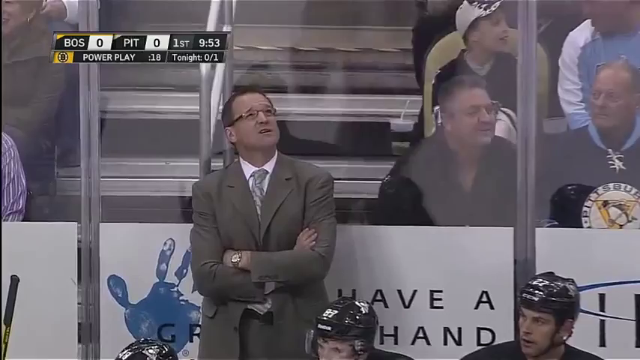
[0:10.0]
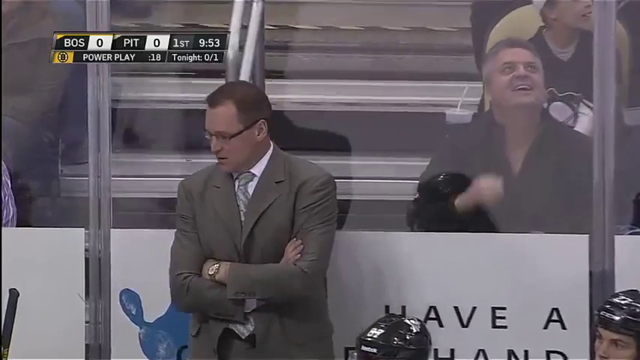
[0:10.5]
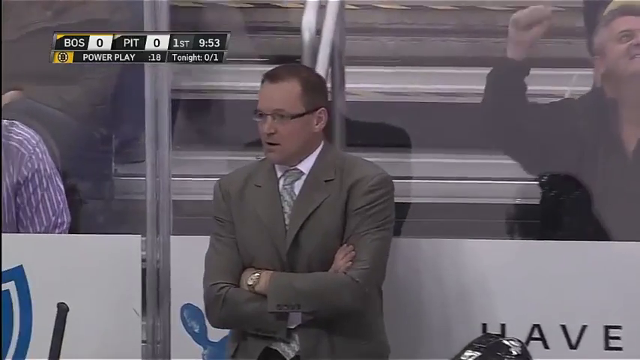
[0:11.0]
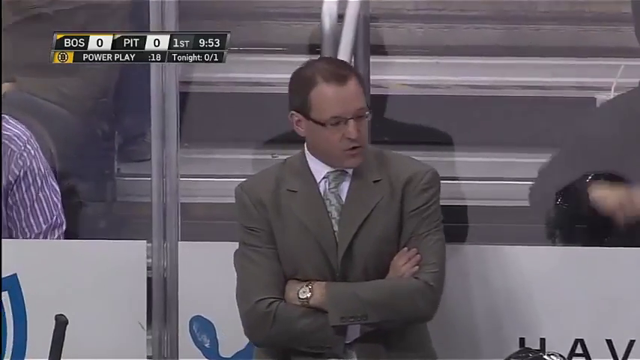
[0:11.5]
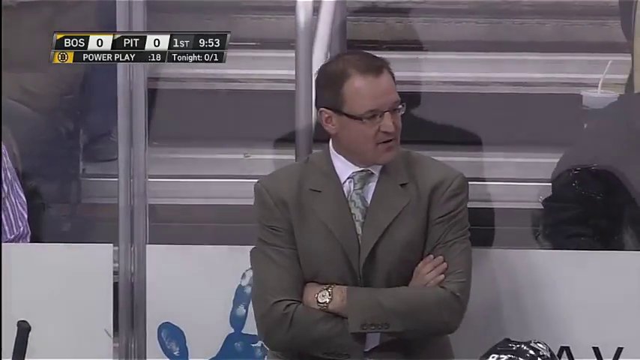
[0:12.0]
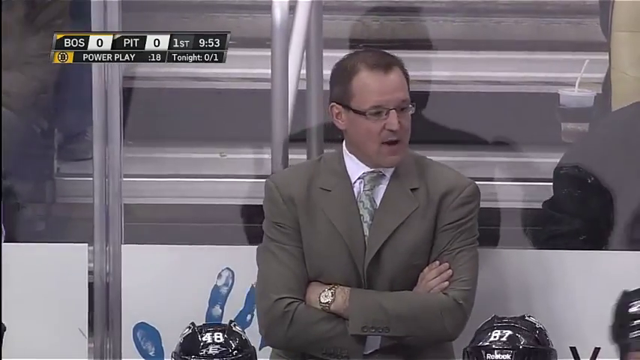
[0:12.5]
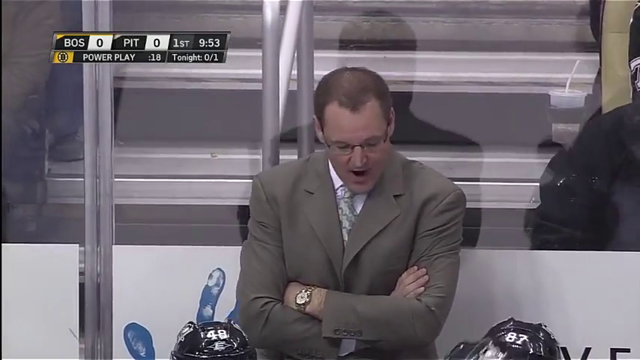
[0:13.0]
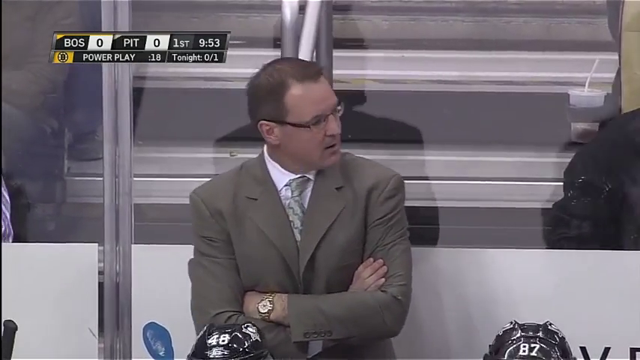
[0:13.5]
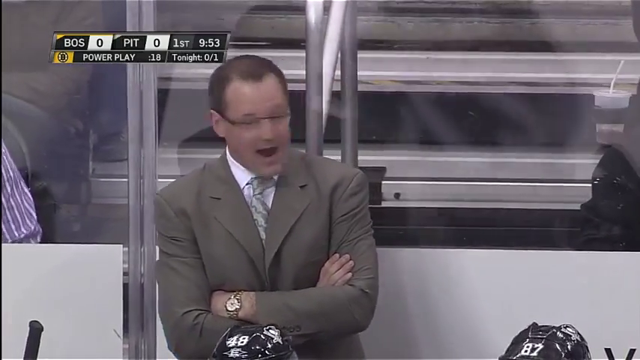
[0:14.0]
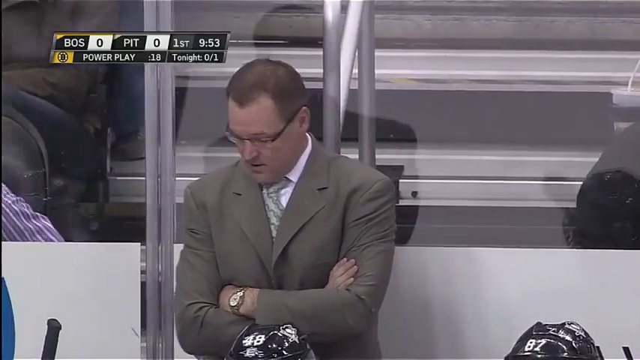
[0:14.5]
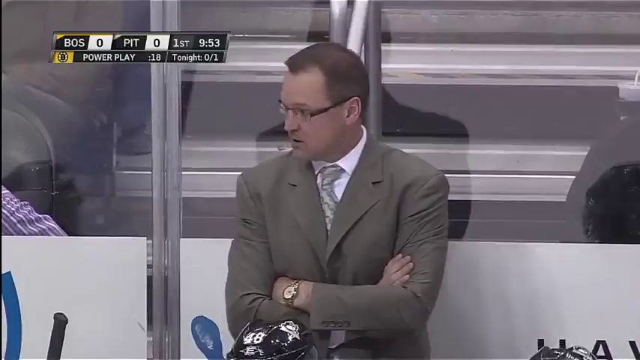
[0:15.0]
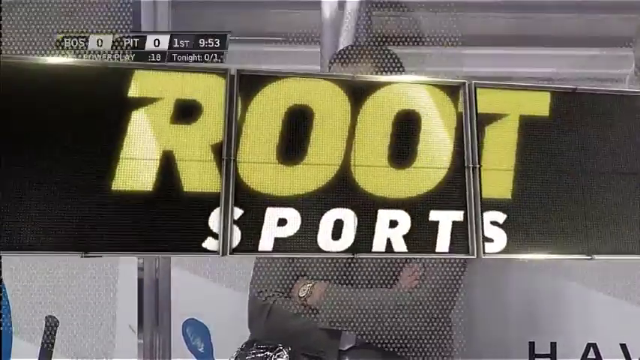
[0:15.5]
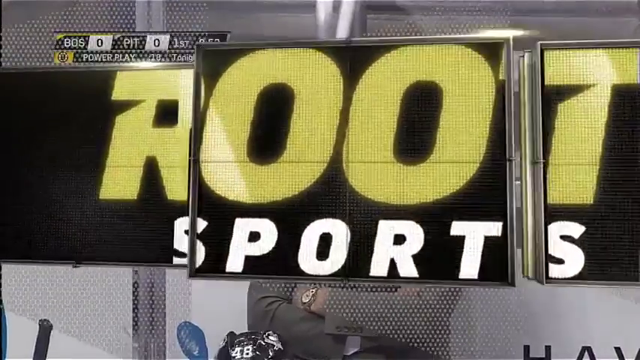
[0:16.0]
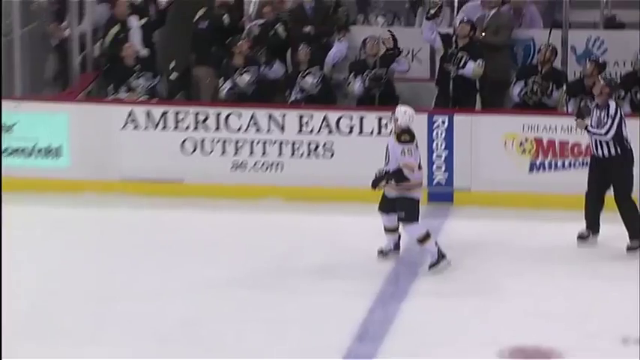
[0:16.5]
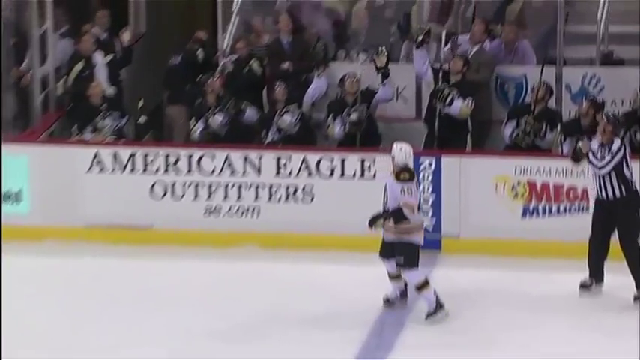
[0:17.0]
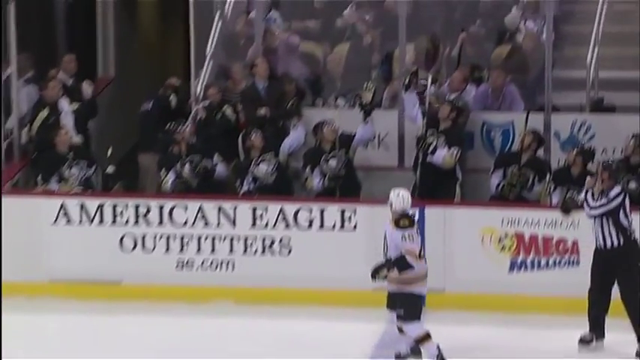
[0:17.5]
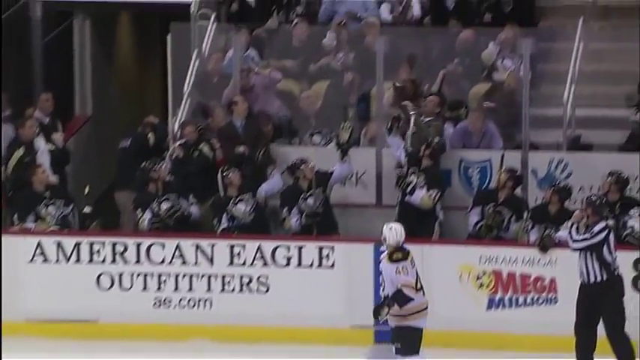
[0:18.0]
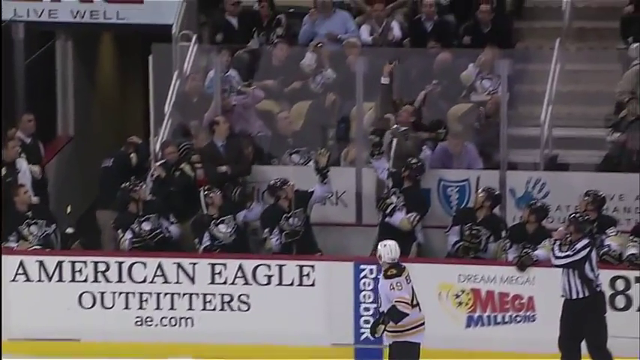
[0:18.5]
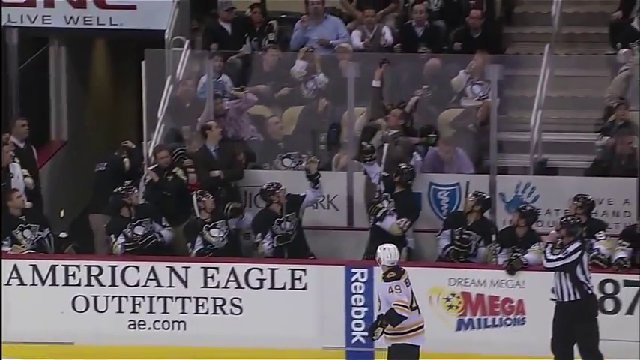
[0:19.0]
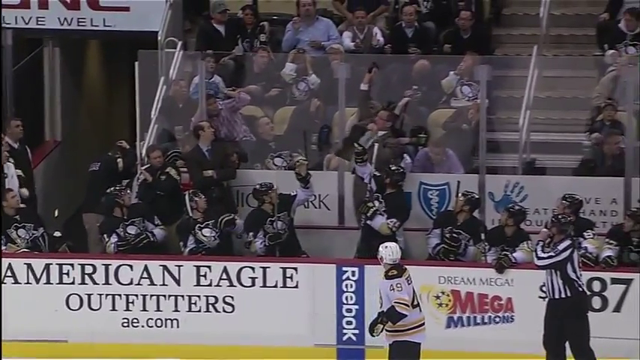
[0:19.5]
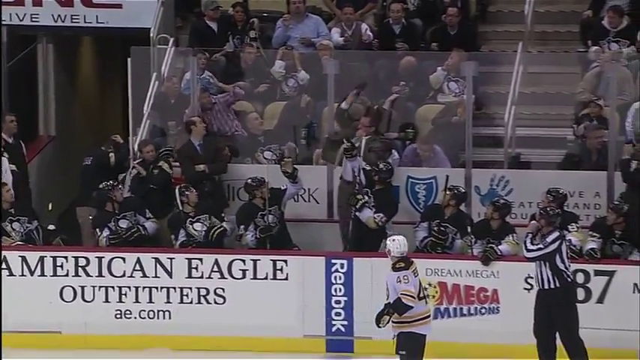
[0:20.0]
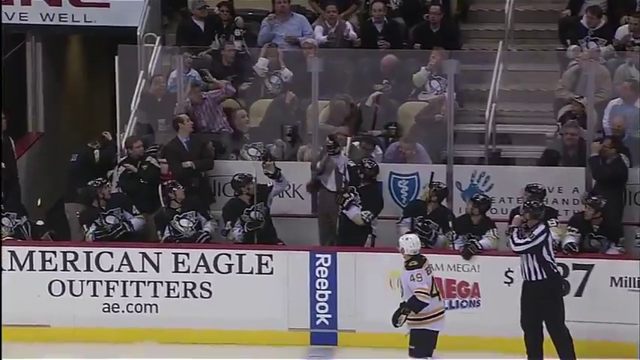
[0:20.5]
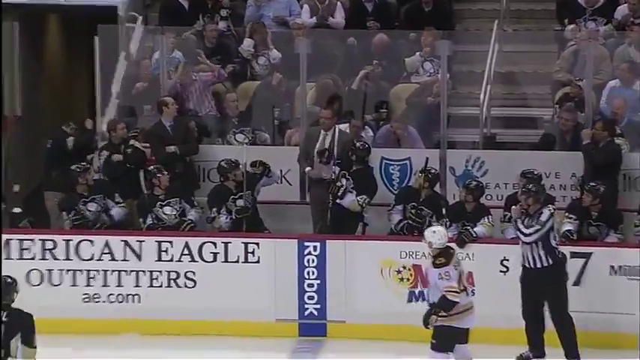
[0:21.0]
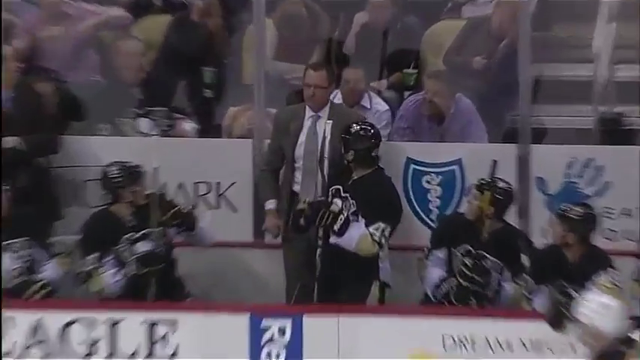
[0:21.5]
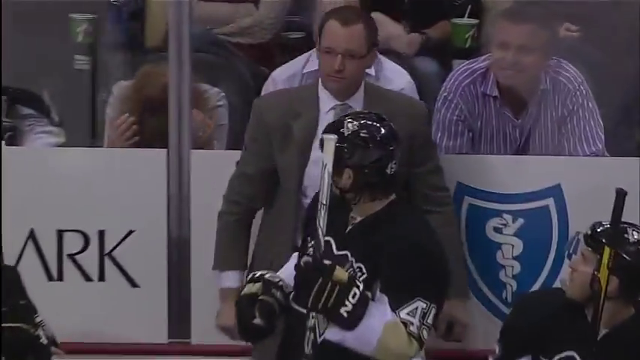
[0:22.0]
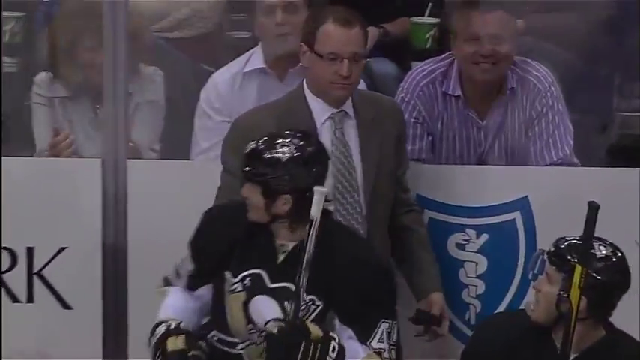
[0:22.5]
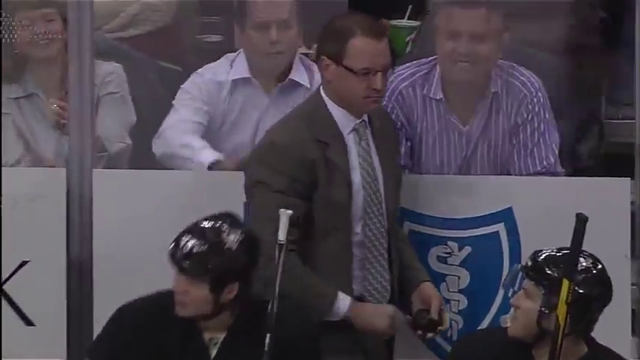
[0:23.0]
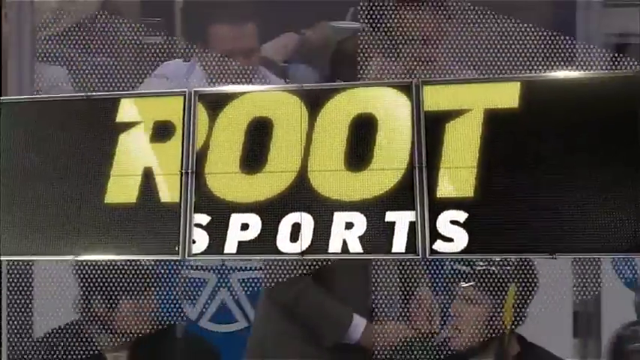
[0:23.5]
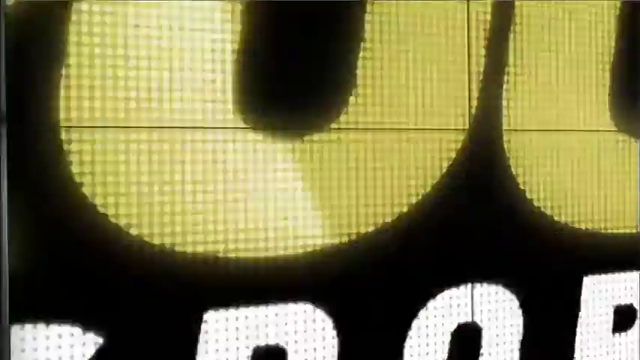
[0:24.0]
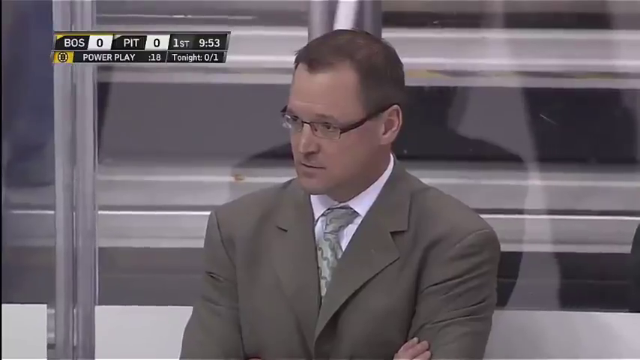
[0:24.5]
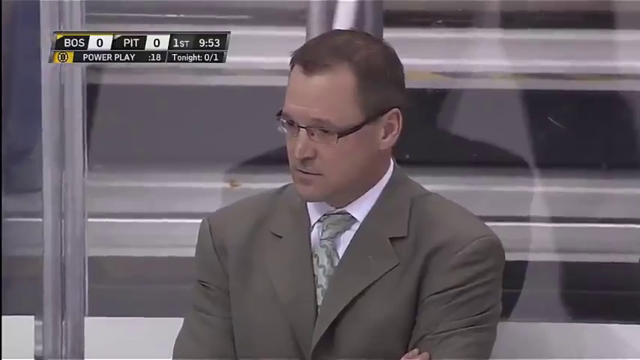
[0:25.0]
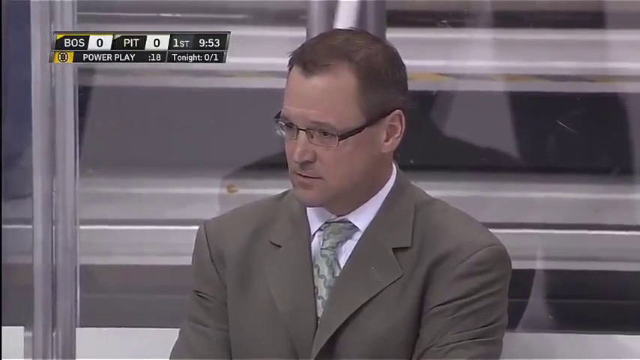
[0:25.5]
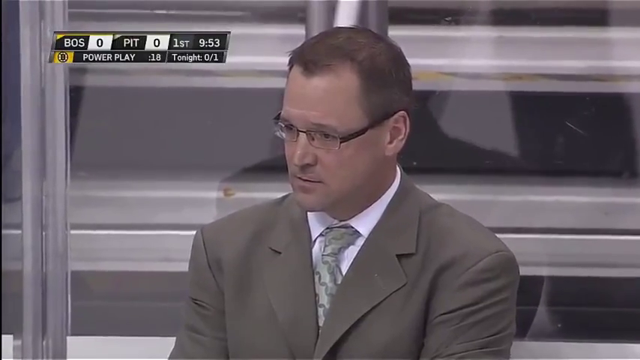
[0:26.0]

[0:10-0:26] An NHL hockey game between the Boston Bruins and the Pittsburgh Penguins is underway. Boston wears black on black, and Pittsburgh wears white on white jerseys. The team in black has the puck and attempts a pass, but the puck goes up over the railing and over the plexiglass, and the Pittsburgh Penguins coach reaches up and catches it in midair. After the live action, the video cuts to a slow-motion replay of the coach catching the puck. The coach is a white male with short hair and glasses, wearing a tan suit, a gray tie and a wristwatch. He sees the puck coming, reaches up with his left hand and catches it midair, which looks like a fairly good and unusual catch for a coach. The crowd is visible in the background.